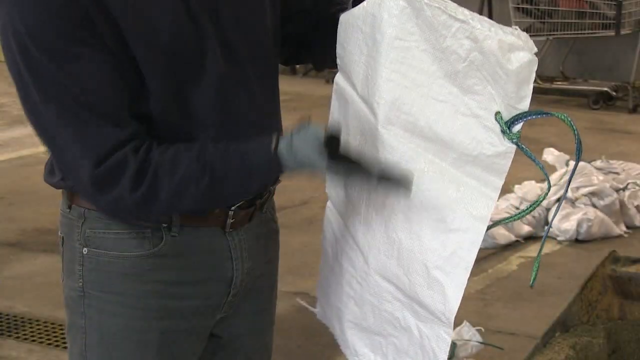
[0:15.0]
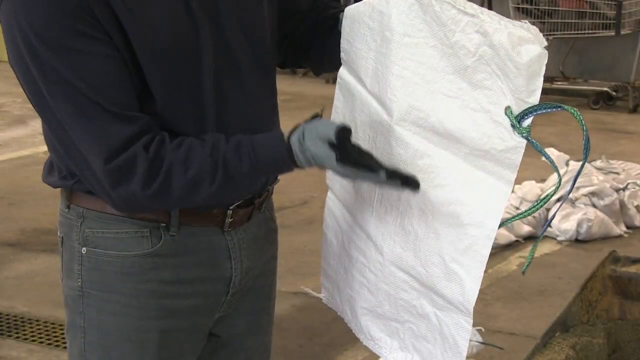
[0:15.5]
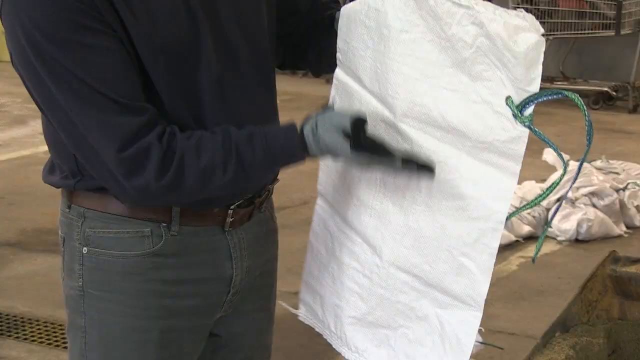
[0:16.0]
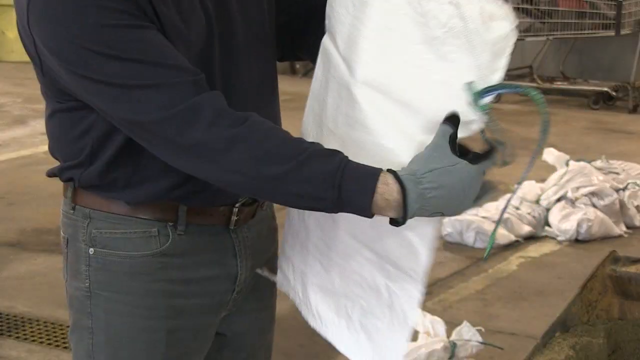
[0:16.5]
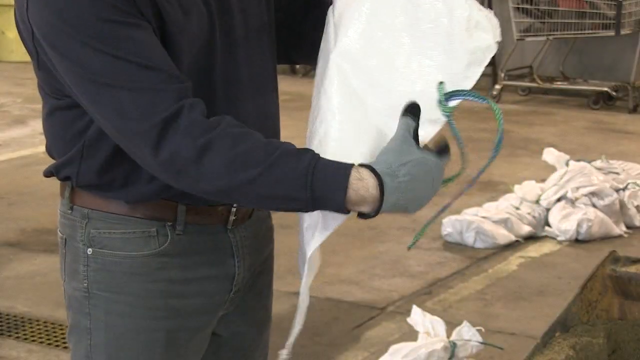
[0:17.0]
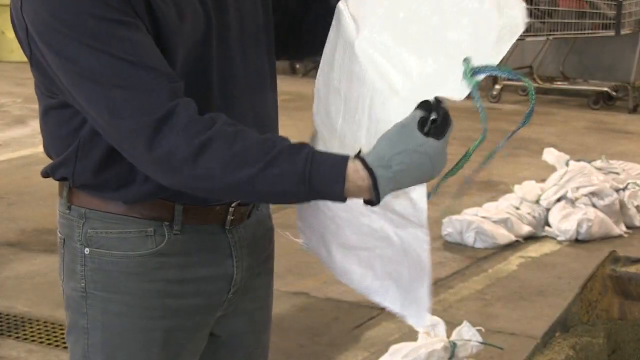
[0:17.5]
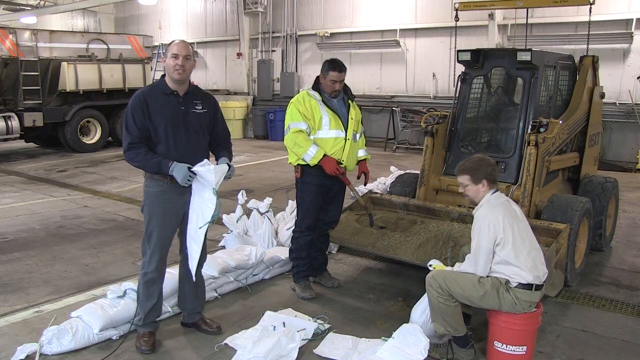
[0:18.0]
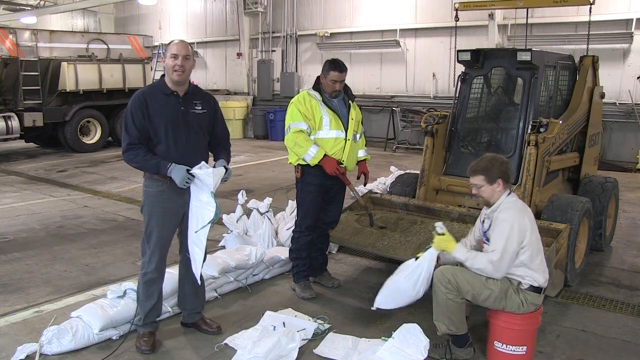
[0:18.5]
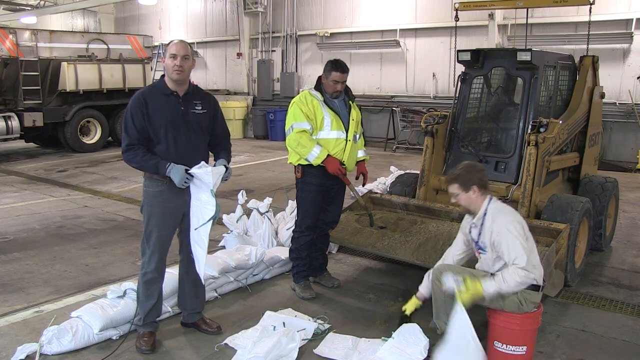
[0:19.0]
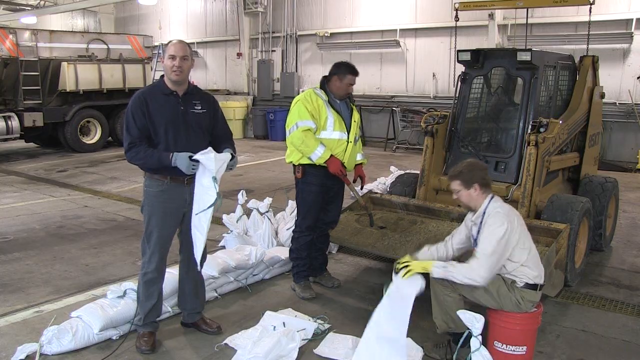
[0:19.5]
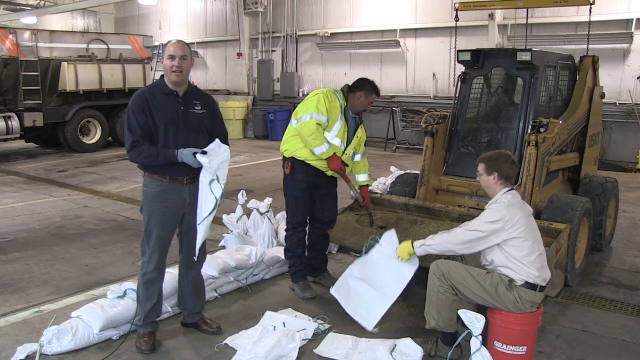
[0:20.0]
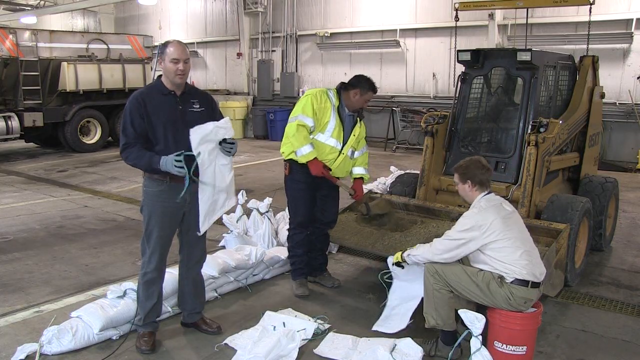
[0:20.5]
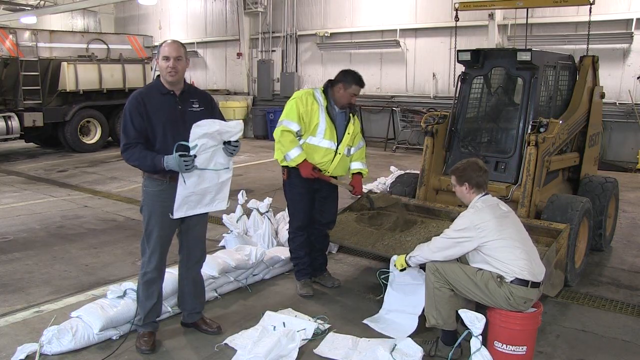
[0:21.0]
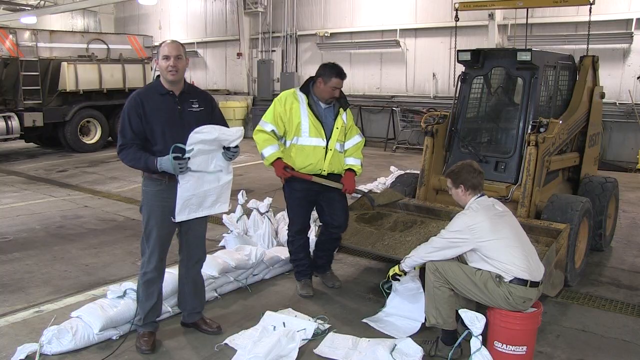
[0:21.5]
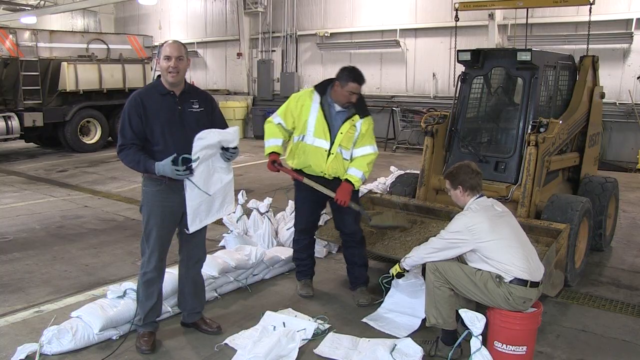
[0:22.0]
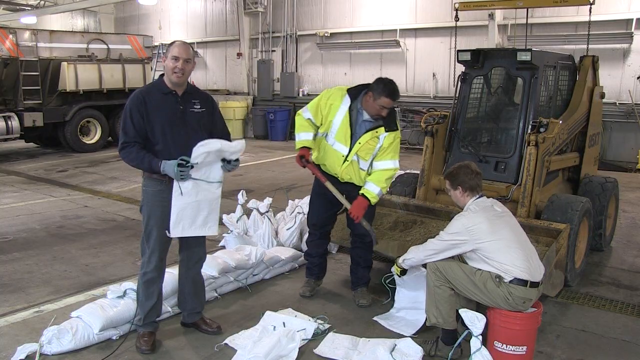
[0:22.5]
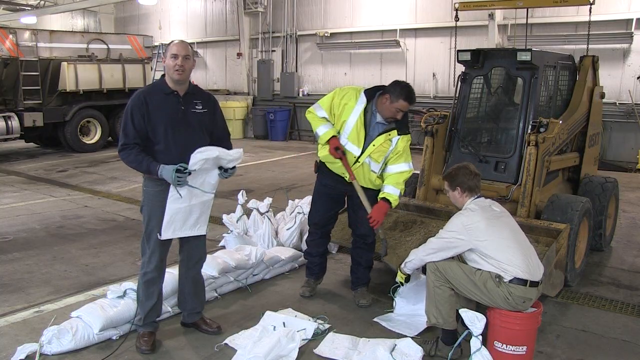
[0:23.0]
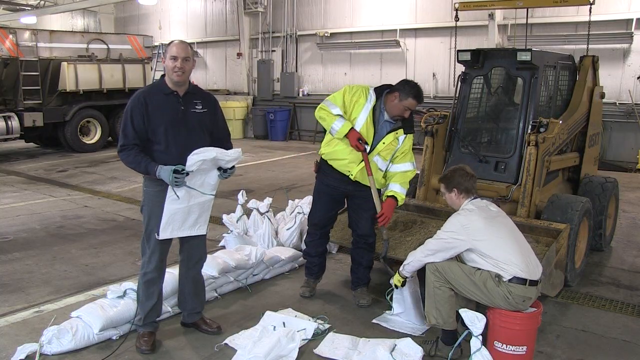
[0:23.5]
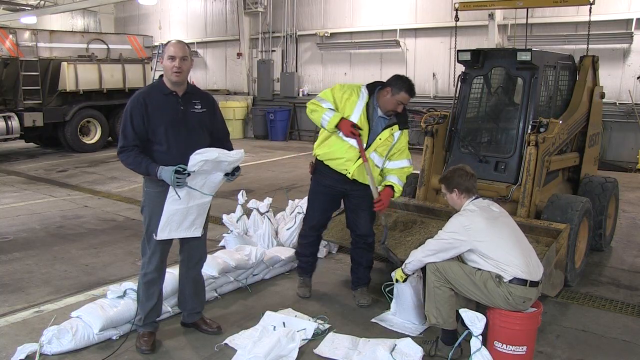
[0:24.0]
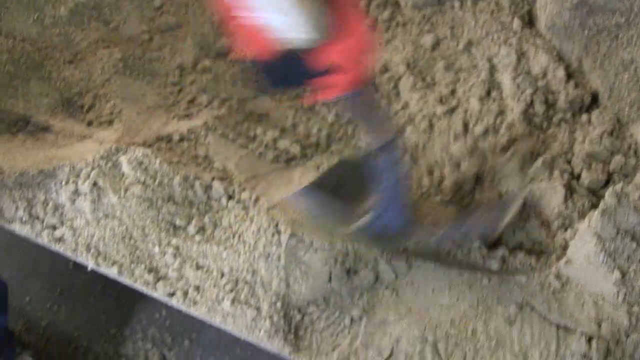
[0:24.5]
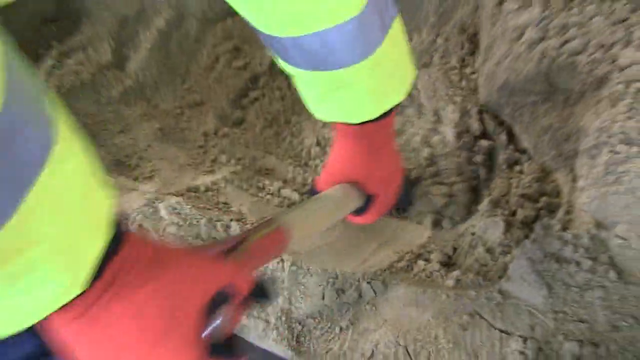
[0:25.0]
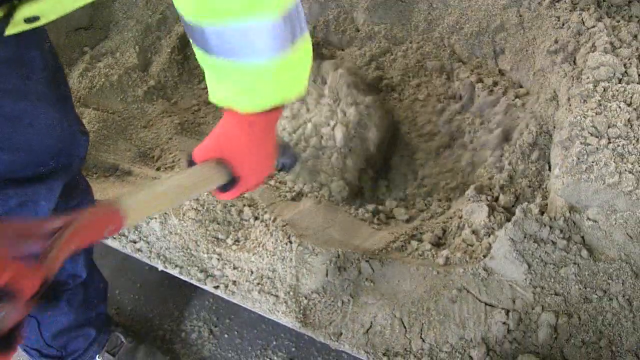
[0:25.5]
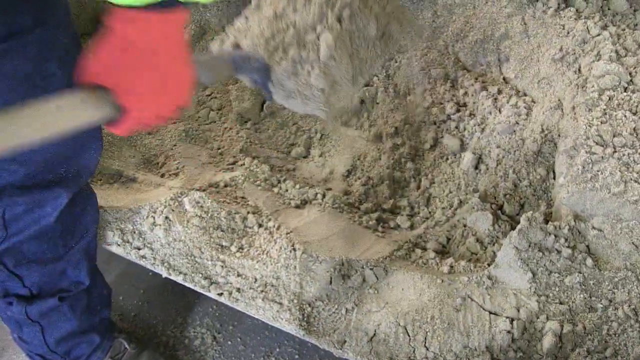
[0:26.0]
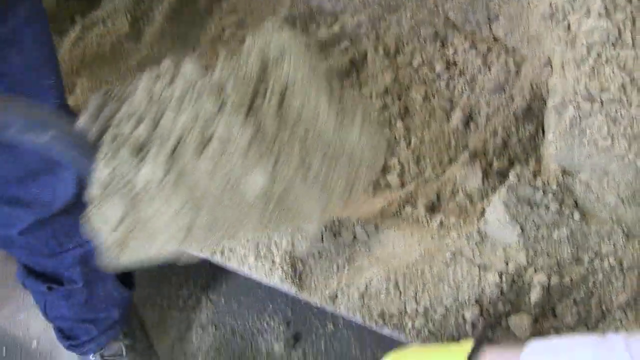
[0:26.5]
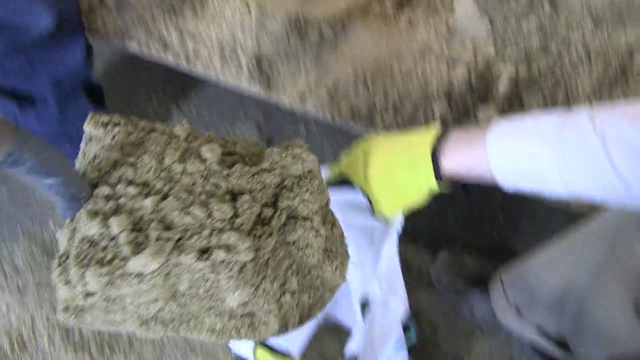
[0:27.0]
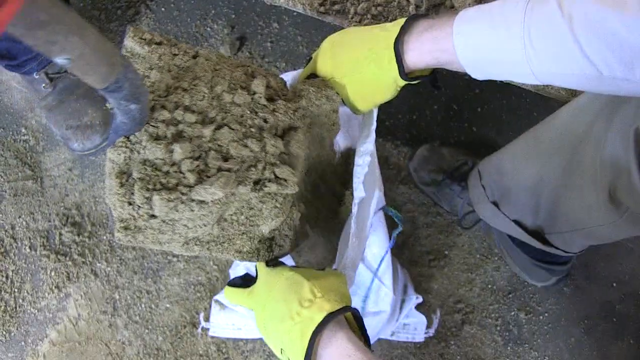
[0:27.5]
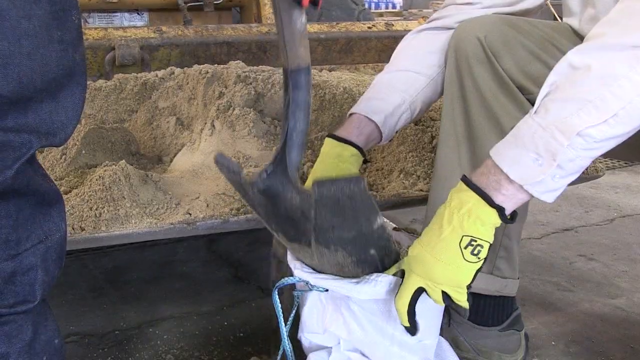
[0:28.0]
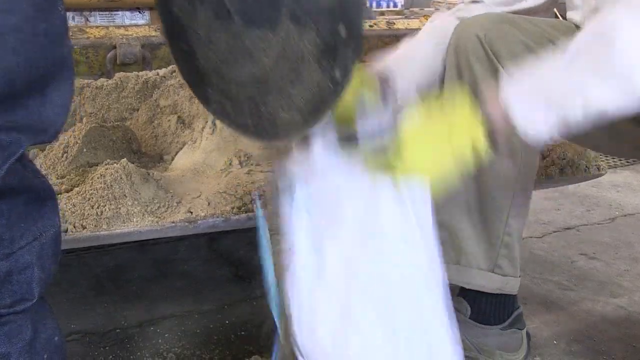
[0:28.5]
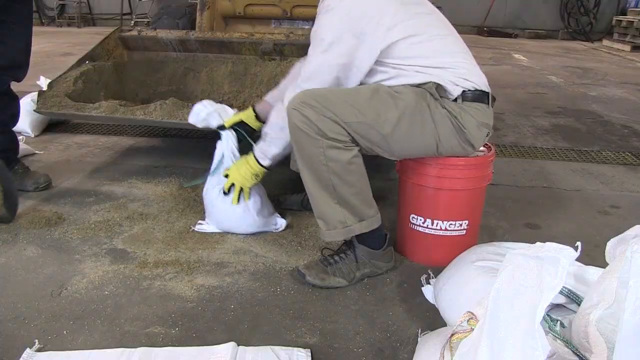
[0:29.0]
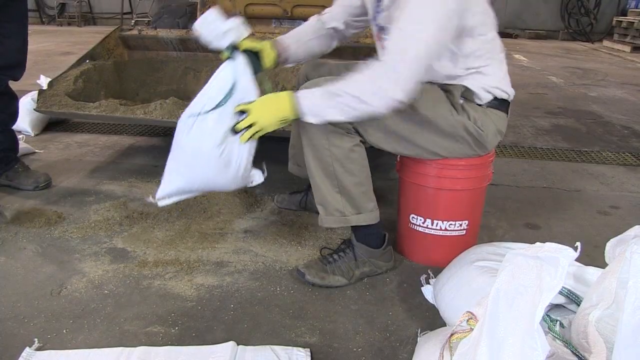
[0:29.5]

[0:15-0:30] The speaker continues talking while his co-workers in the back shovel sand into empty sandbags. He gestures, seemingly indicating that the sandbags should be filled carefully without overflowing, to about two-thirds of their length. All of this takes place in a warehouse.